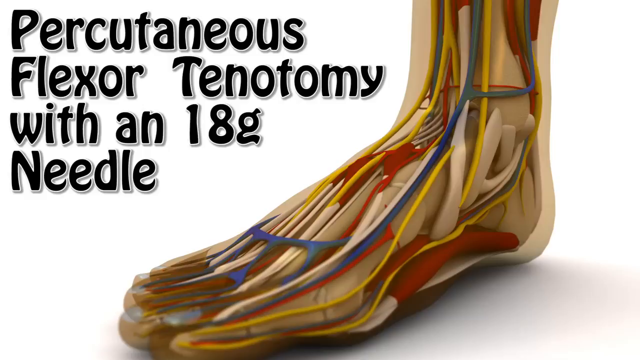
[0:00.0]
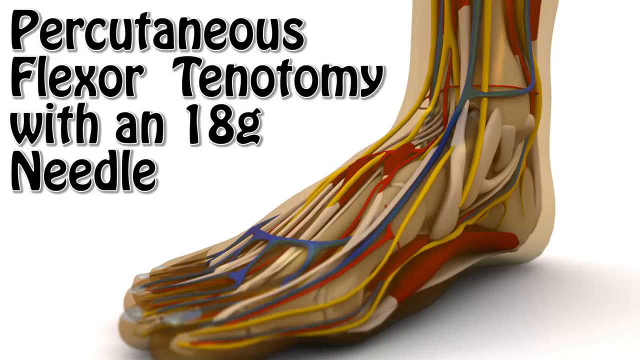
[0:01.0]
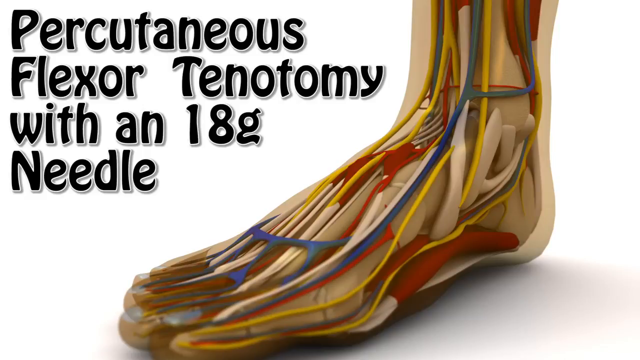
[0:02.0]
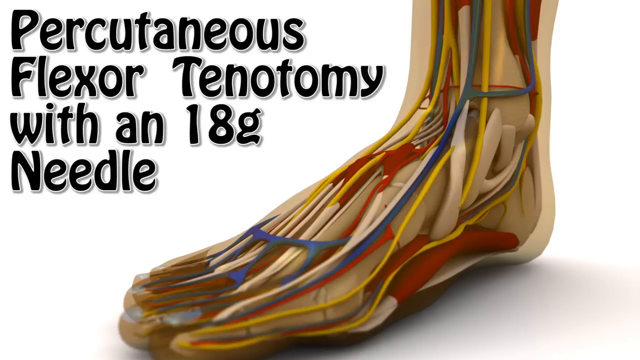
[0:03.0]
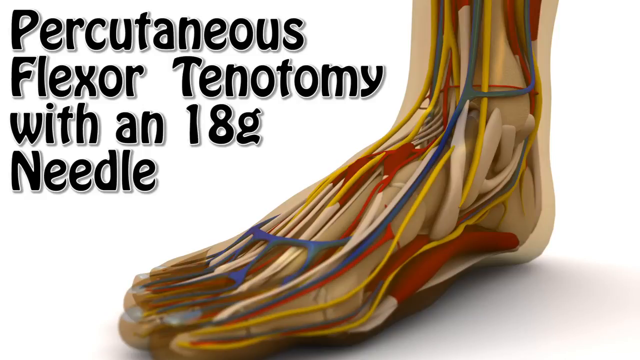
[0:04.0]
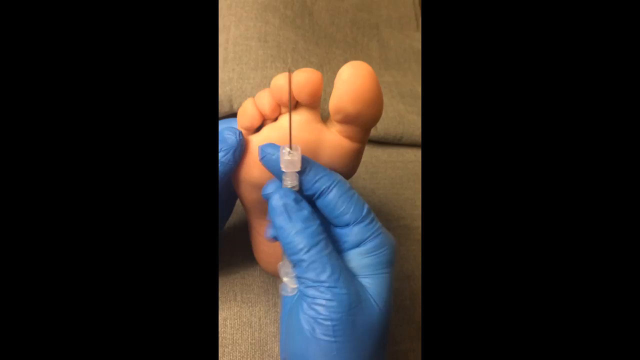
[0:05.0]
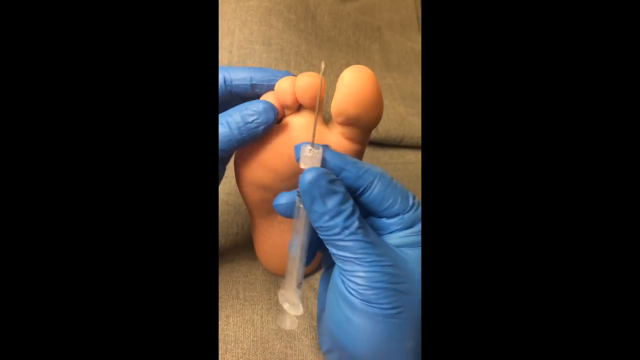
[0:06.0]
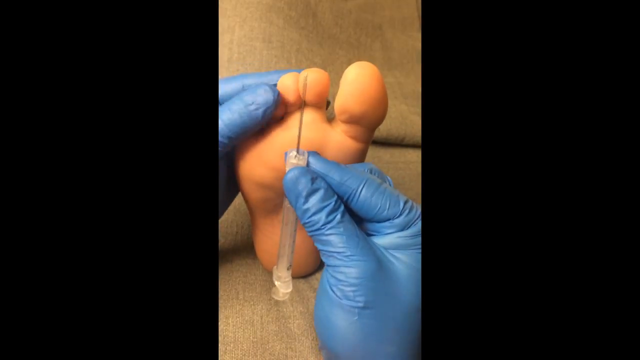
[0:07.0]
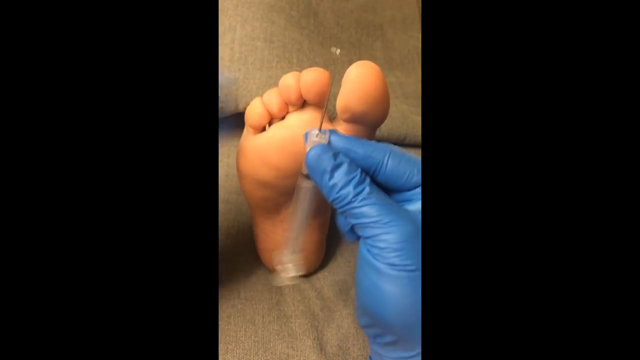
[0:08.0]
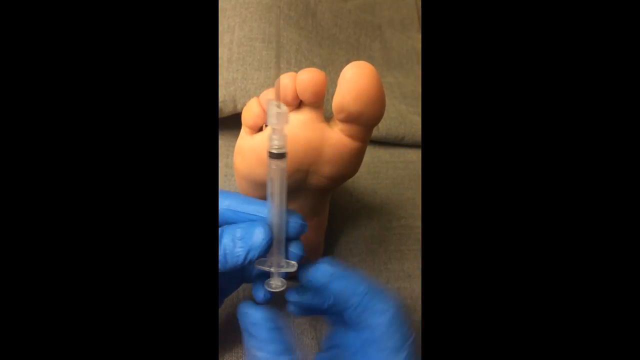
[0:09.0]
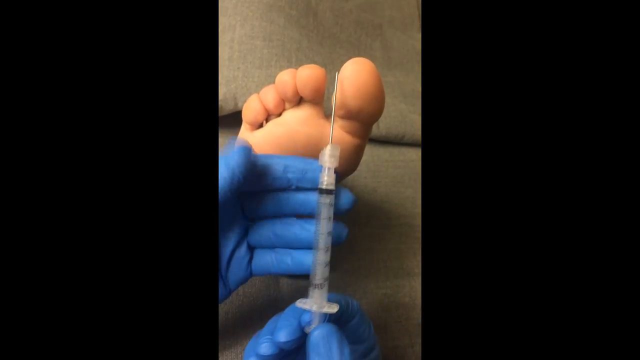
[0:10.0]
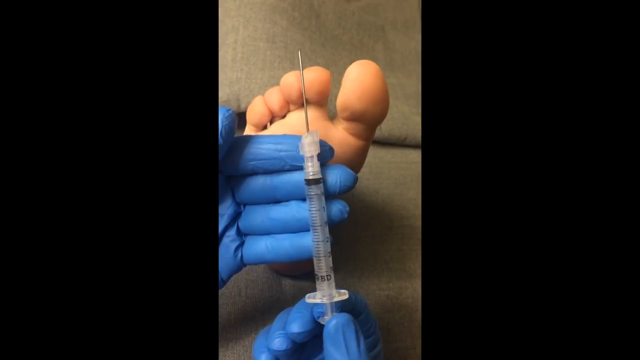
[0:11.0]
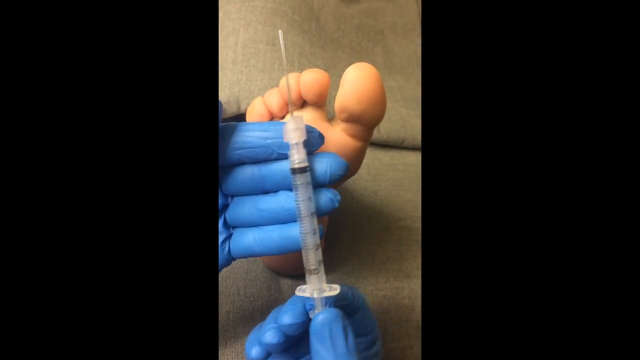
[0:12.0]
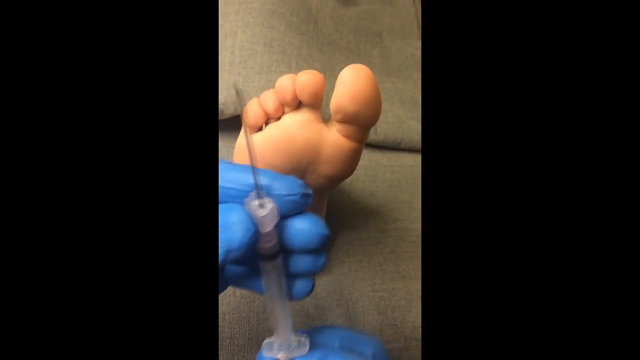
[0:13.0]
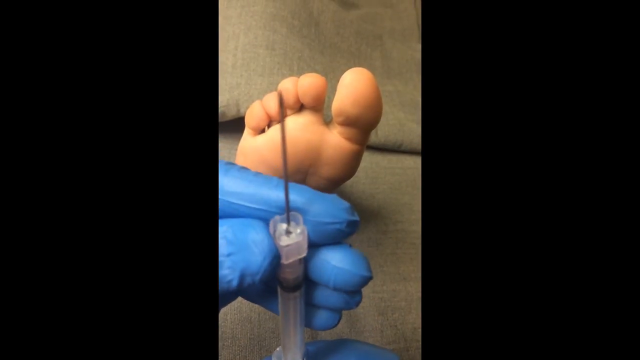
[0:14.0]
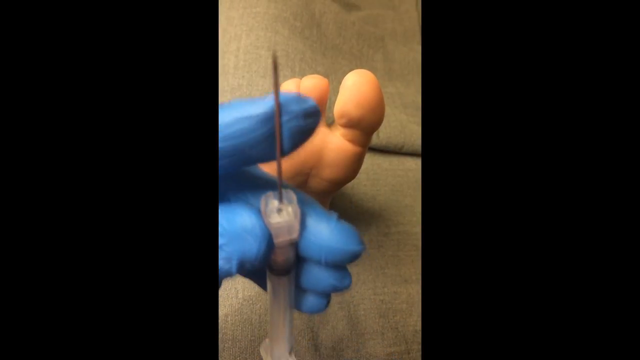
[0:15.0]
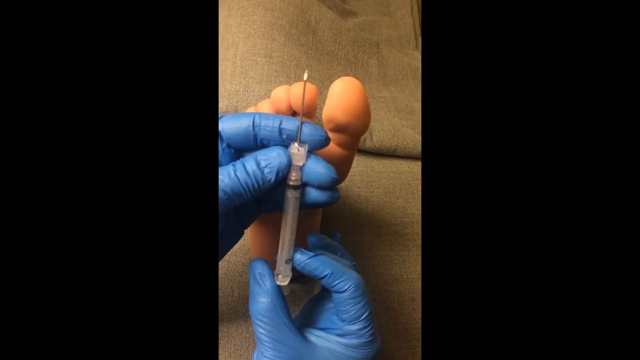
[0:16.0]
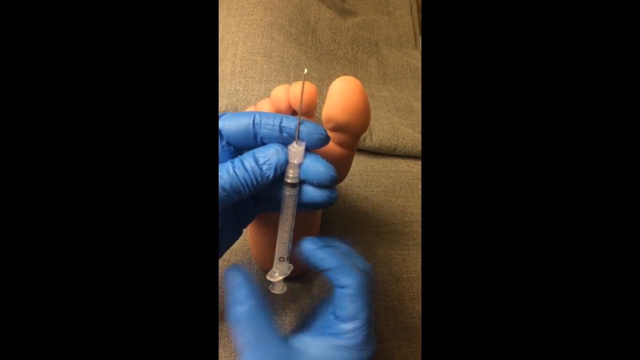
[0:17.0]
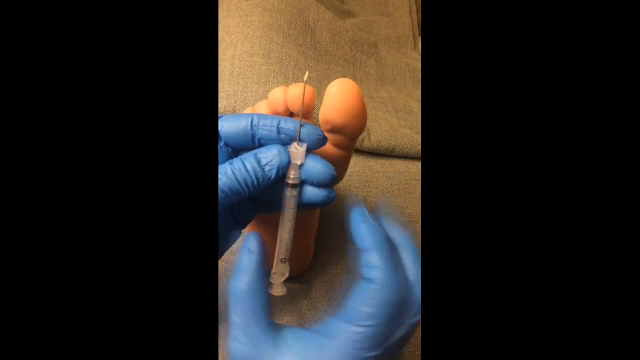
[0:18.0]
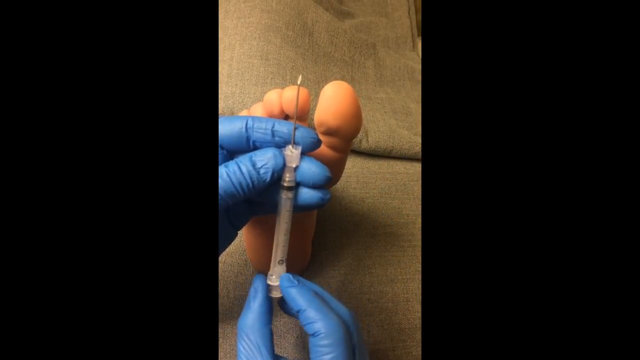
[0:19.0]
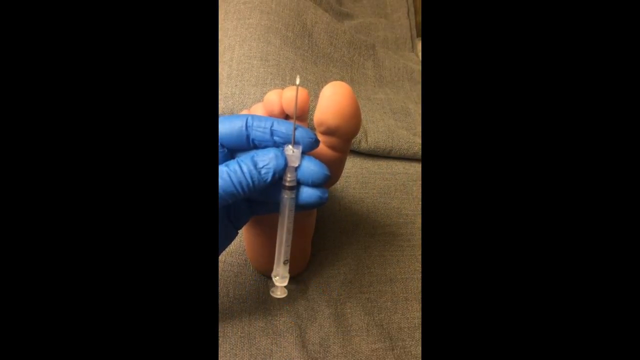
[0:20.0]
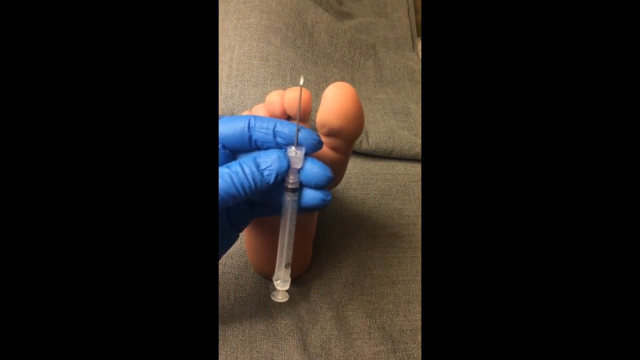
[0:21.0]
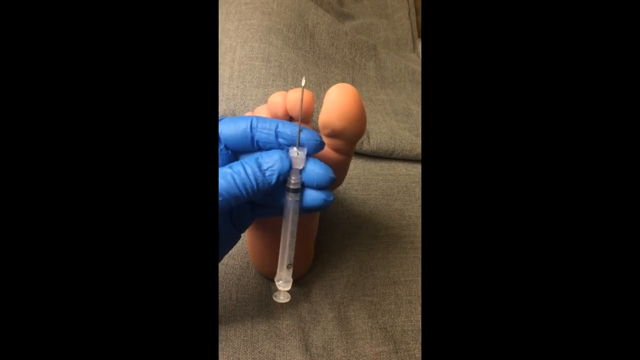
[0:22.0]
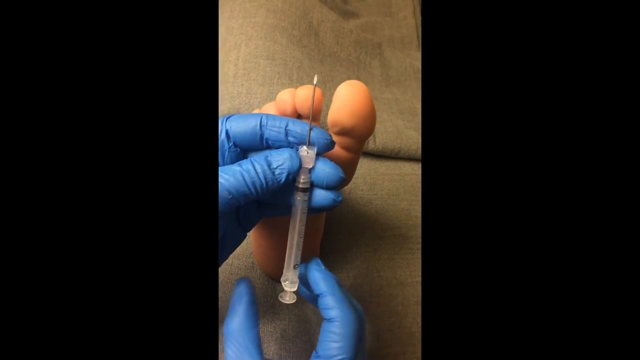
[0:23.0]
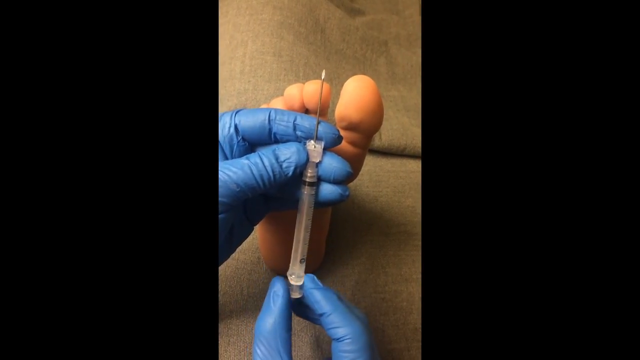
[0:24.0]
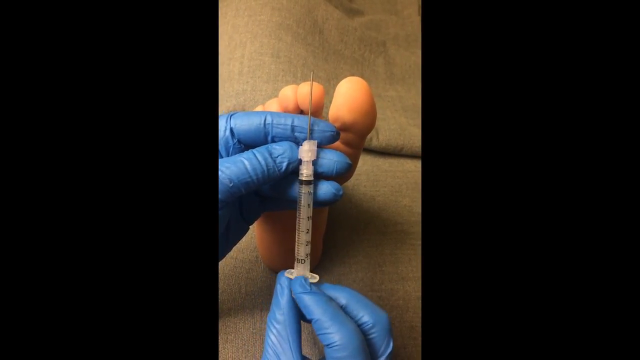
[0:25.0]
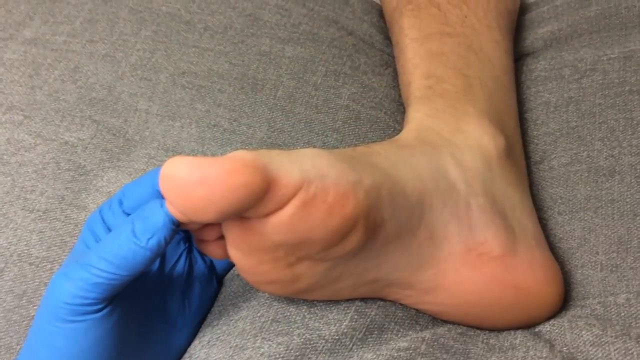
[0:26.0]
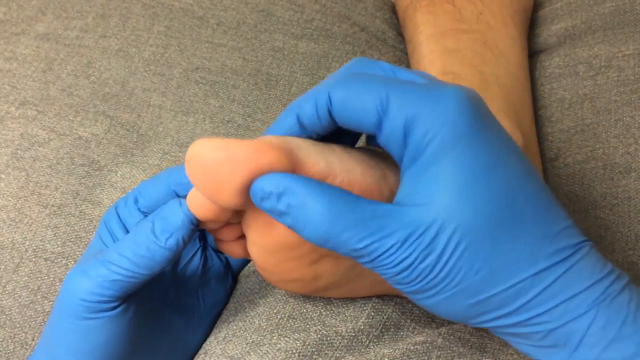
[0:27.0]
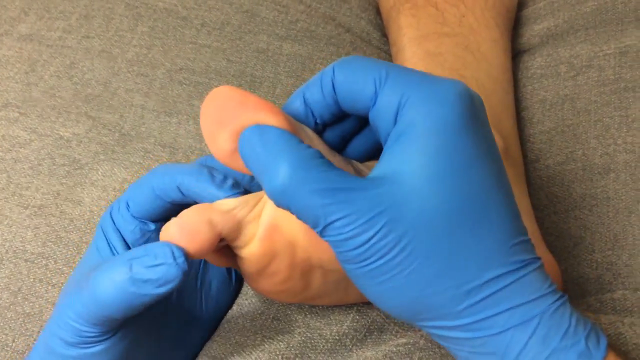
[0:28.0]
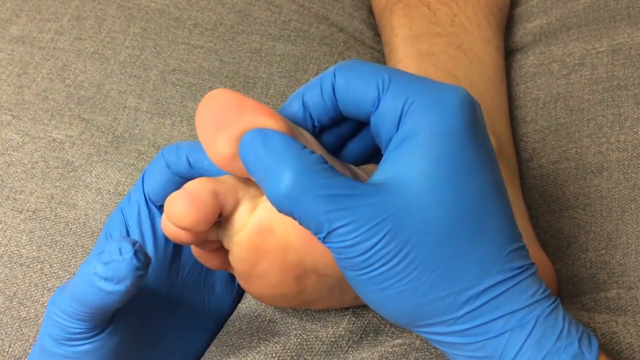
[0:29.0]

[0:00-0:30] An image from an anatomy book shows yellow areas and blue veins, and on the left side of the foot and ankle the text reads "percutaneous flexor tenotomy with an 18G needle." The screen then transitions to an image that takes up only the middle of the screen, a vertical rectangle with everything outside it black. It shows what appear to be a doctor's gloved hands holding a needle with an 18 gauge needle on the end, a fairly big needle. The doctor shows the units on the needle, flips it back over, and puts a finger on the side of the metal part of the needle. The video then transitions to an image of the foot, where the doctor takes the big toe and pushes it back a little. It is the toe of the left foot and appears to be a male's; a small part of the leg is visible, with hair on it.